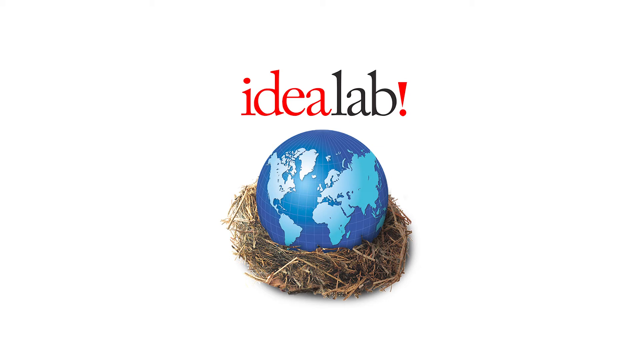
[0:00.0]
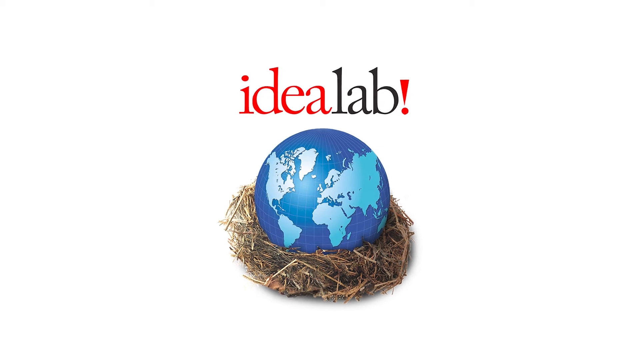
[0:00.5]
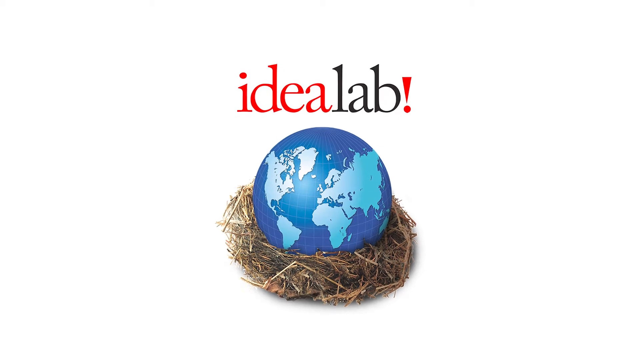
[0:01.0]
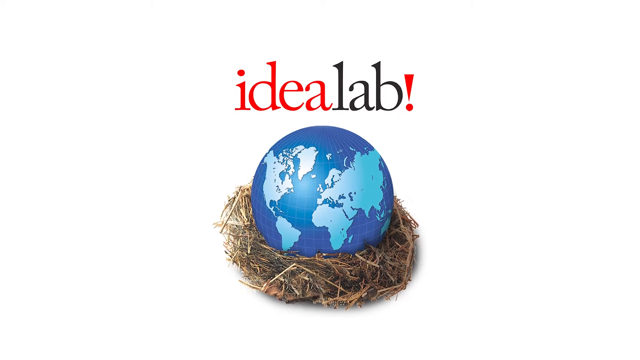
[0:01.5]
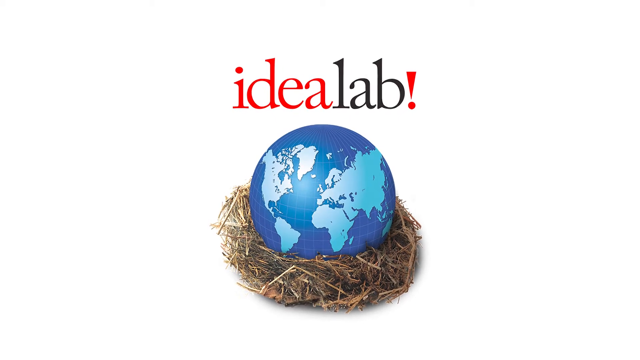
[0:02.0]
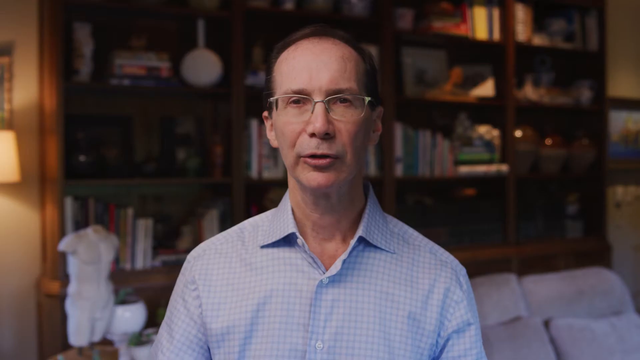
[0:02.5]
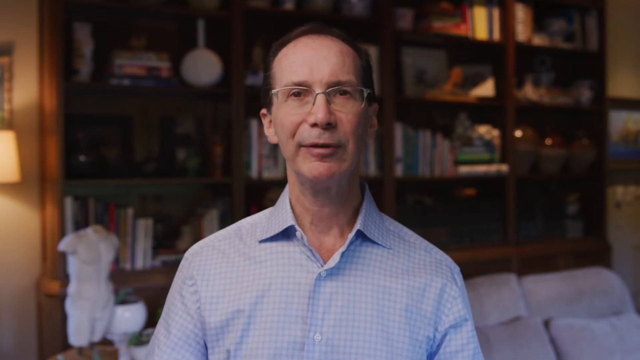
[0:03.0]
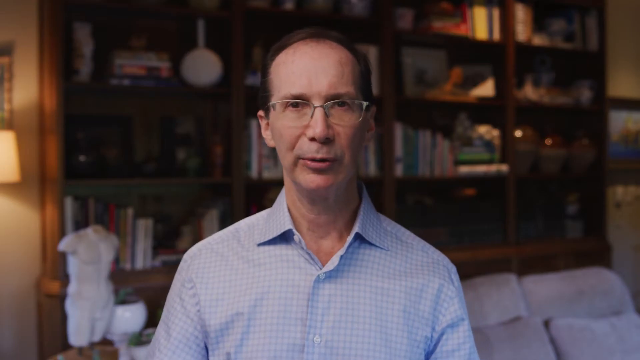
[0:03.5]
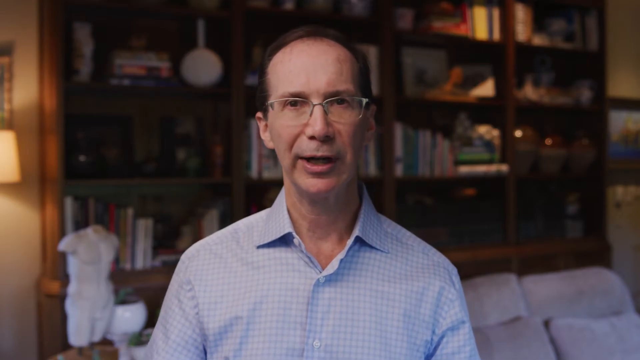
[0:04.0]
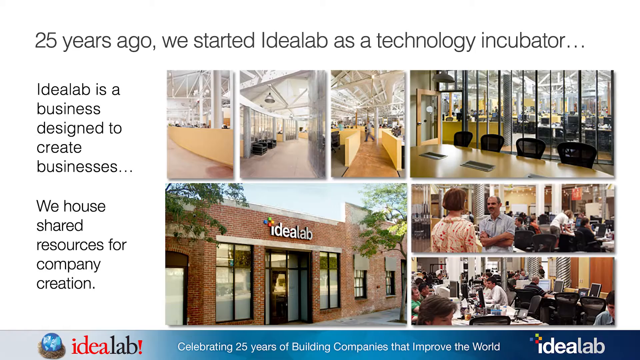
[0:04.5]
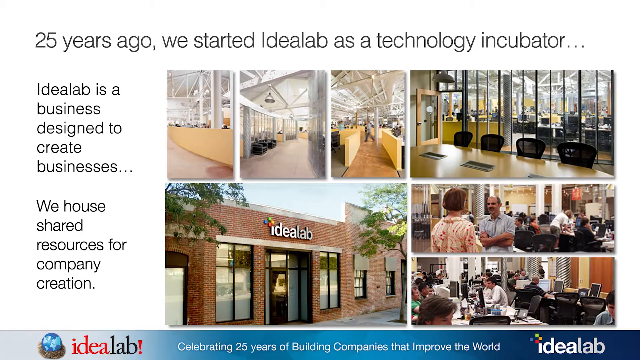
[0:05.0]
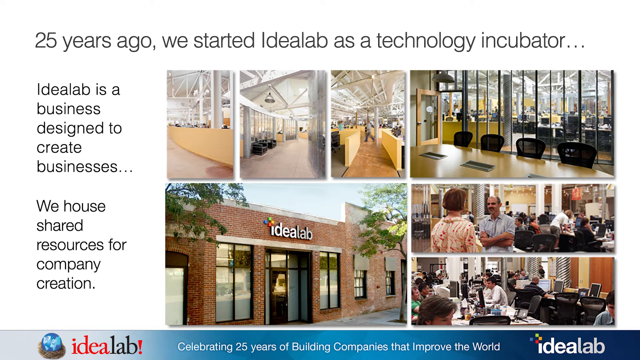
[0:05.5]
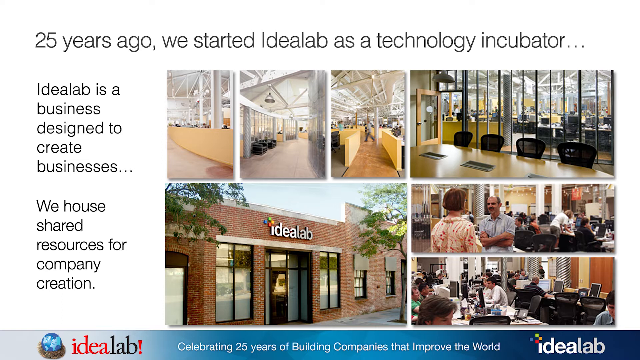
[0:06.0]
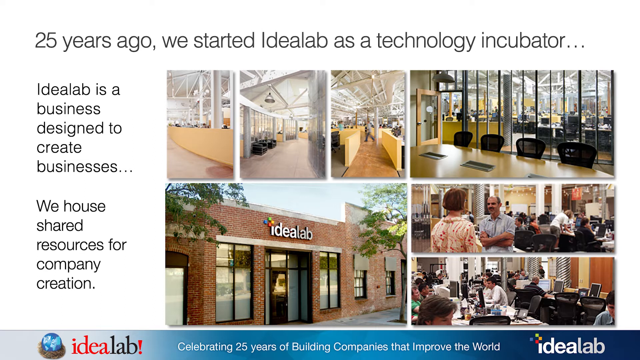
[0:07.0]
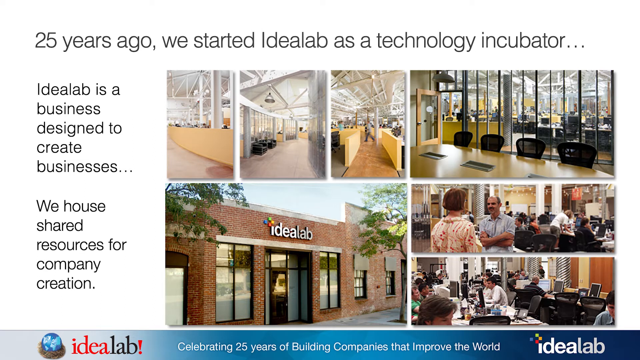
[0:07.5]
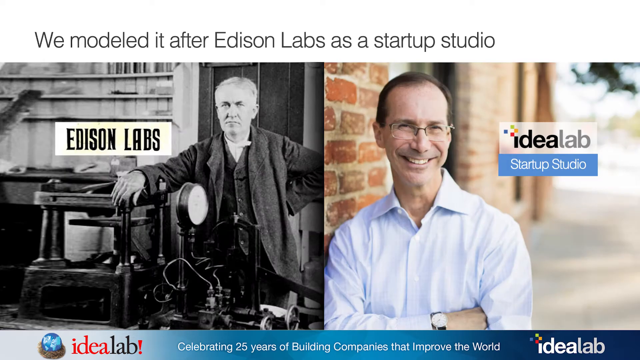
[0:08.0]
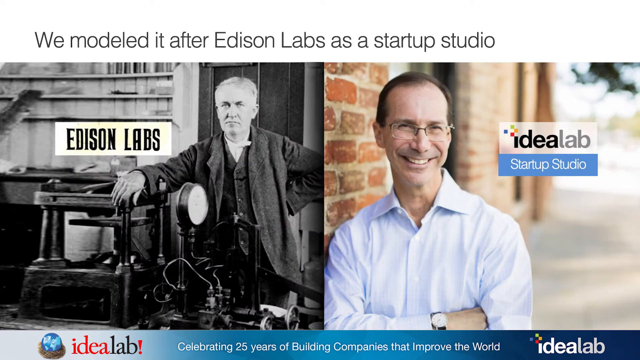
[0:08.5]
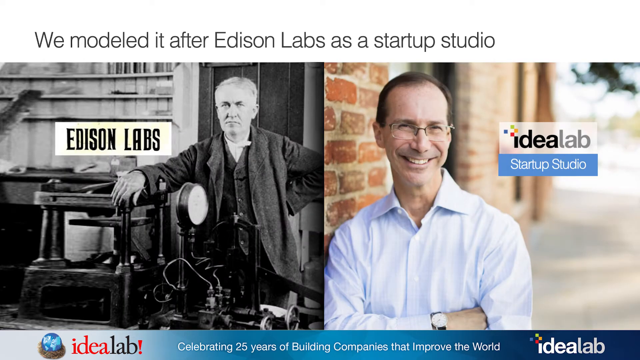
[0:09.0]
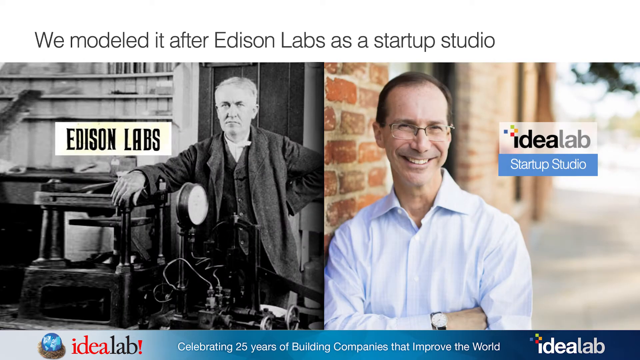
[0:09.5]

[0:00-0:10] The video is sponsored by the company Idealab. It begins with an image of a globe placed inside a nest. It then cuts to a man sitting, with shelves holding various books and other items in the background. He appears to be about 55 to 60 years old, wears eyeglasses and a blue and white dress shirt, and speaks directly into the camera. The video then cuts to a title stating "25 years ago we started Idealab as a technology incubator." A collage of pictures follows: the Idealab office building, an empty conference room with black chairs, two people speaking with others sitting in the background, and people working. Text states "Idealab is a business designed to create businesses. We house shared resources for company creation."